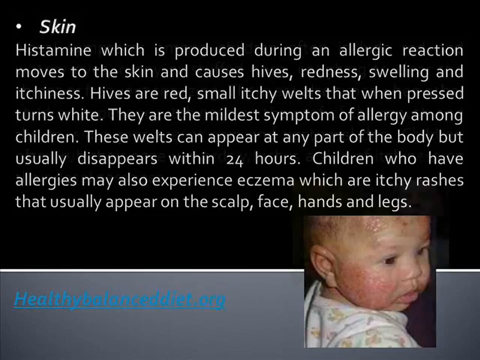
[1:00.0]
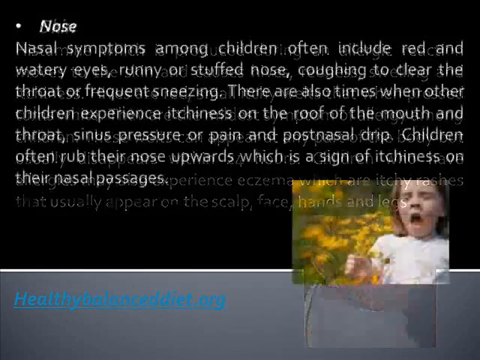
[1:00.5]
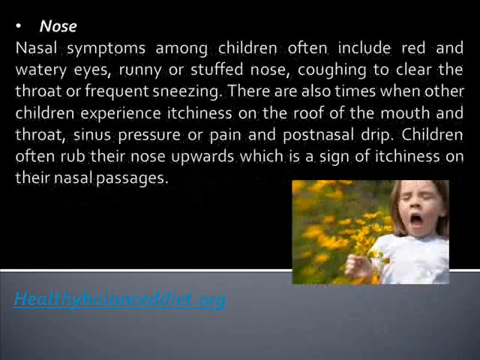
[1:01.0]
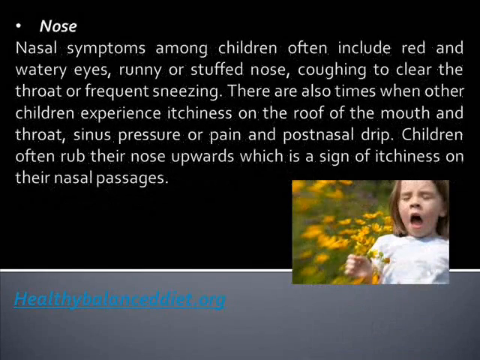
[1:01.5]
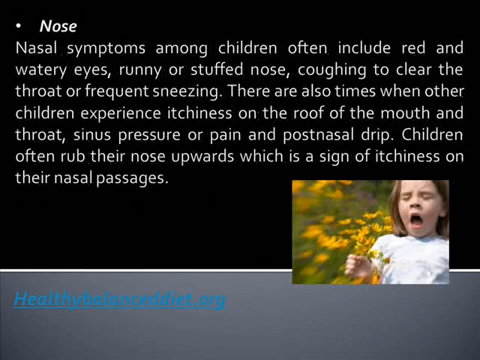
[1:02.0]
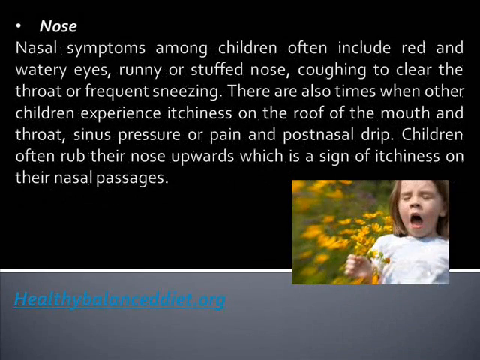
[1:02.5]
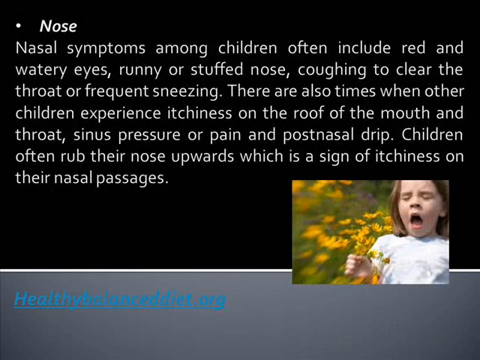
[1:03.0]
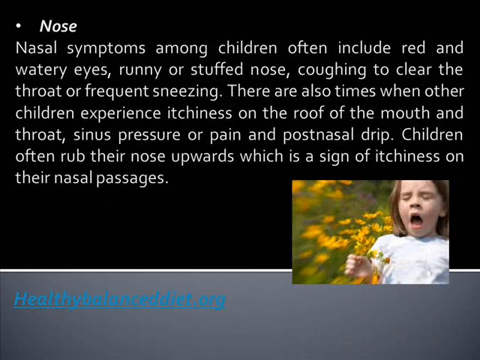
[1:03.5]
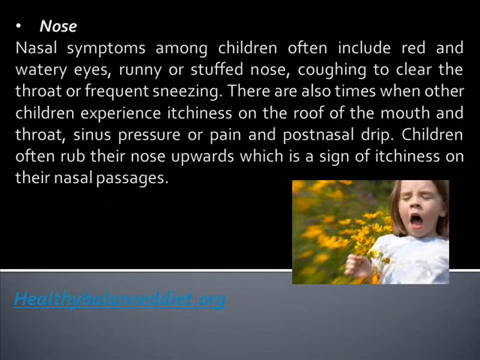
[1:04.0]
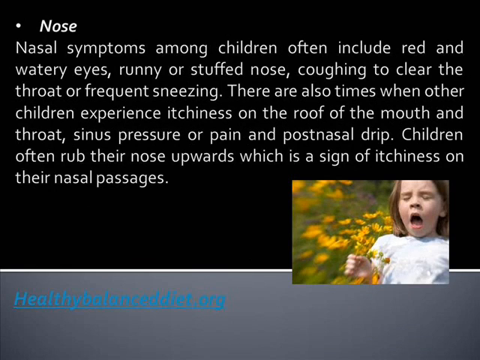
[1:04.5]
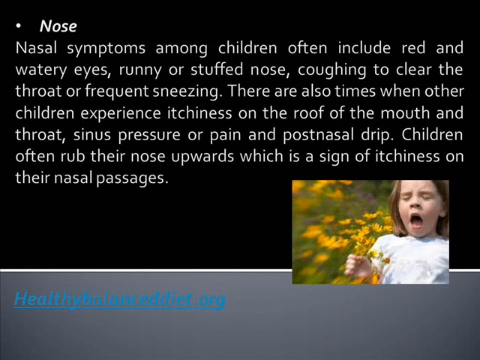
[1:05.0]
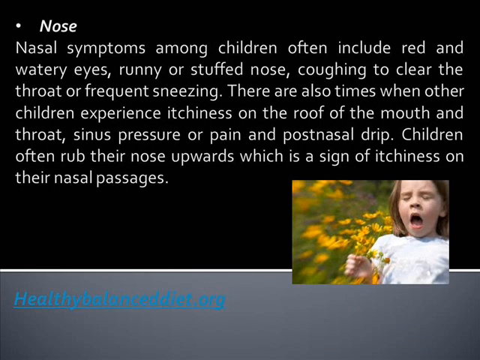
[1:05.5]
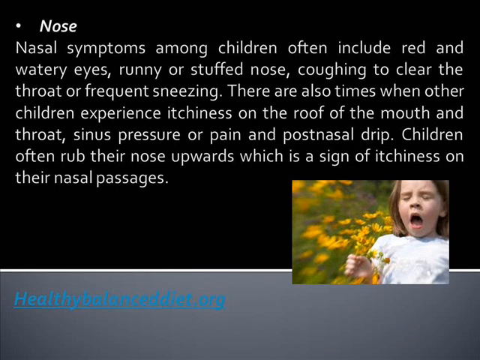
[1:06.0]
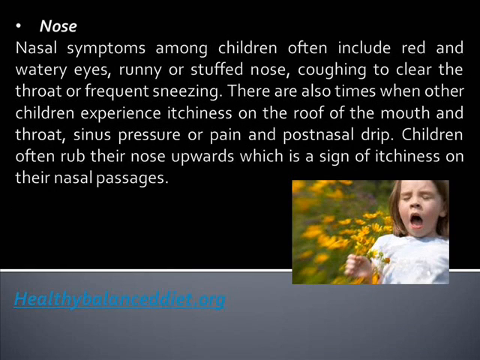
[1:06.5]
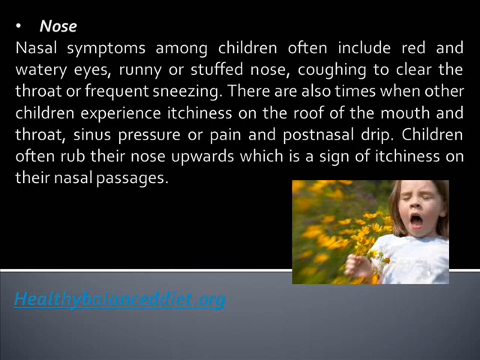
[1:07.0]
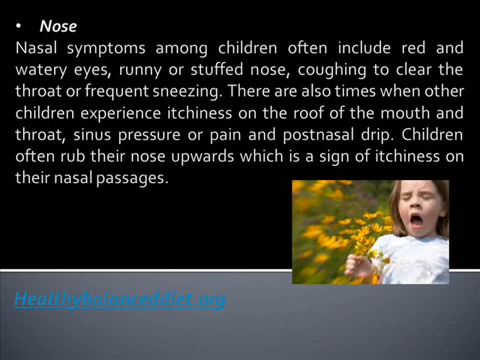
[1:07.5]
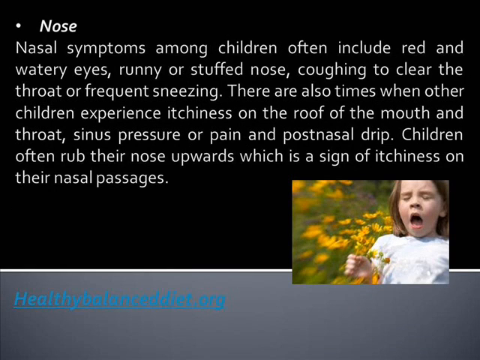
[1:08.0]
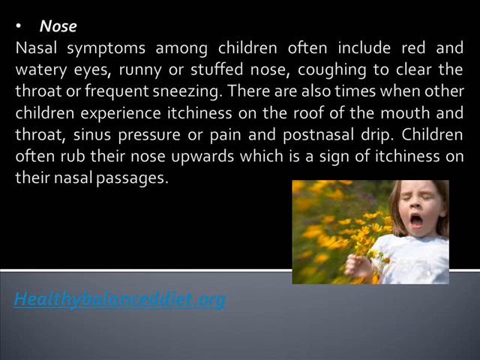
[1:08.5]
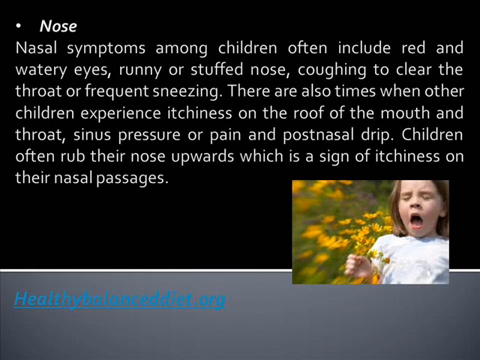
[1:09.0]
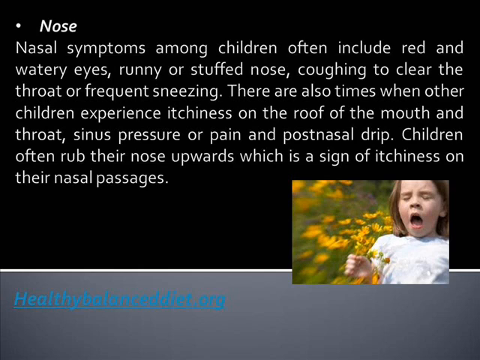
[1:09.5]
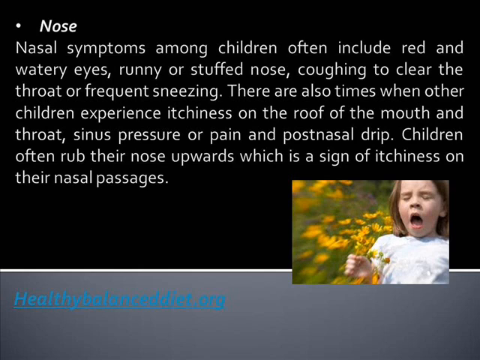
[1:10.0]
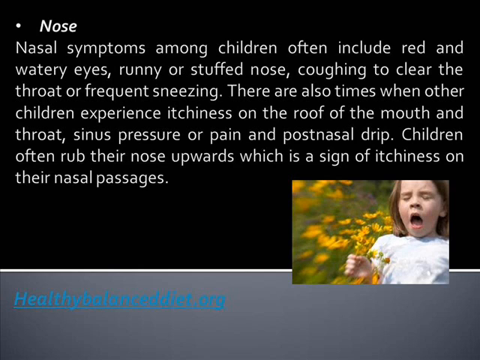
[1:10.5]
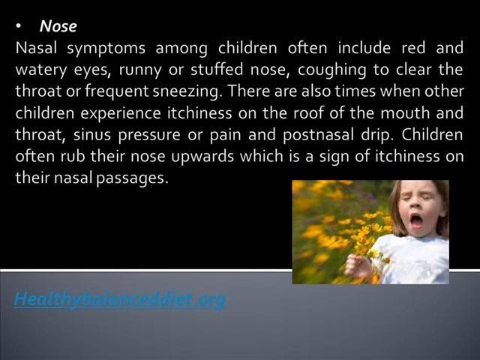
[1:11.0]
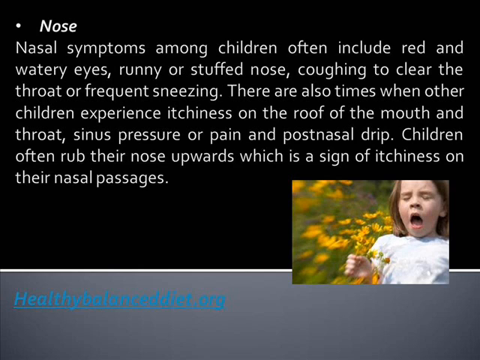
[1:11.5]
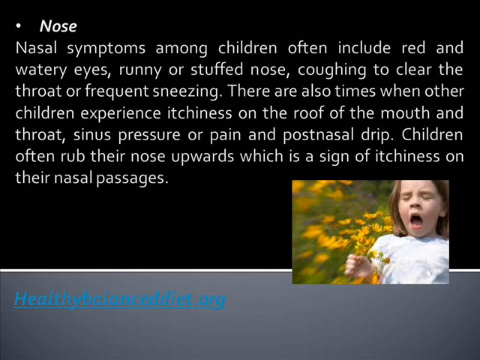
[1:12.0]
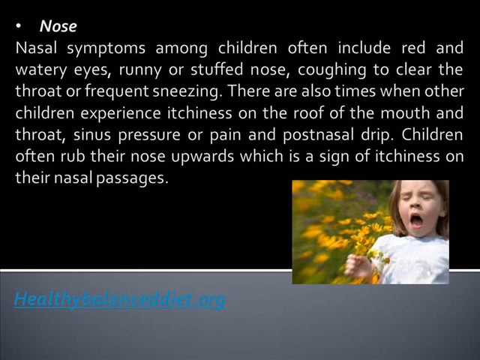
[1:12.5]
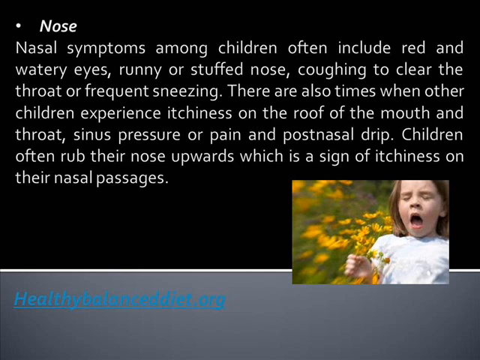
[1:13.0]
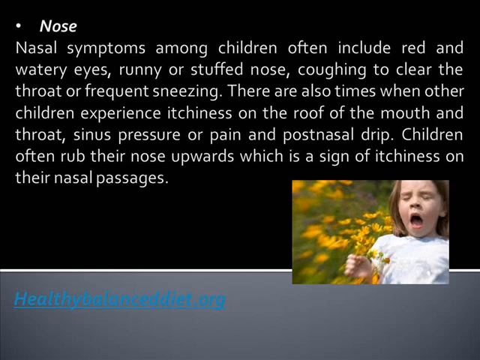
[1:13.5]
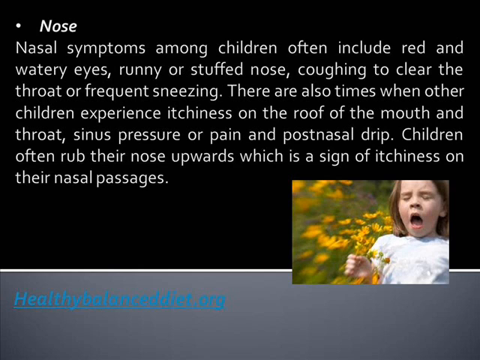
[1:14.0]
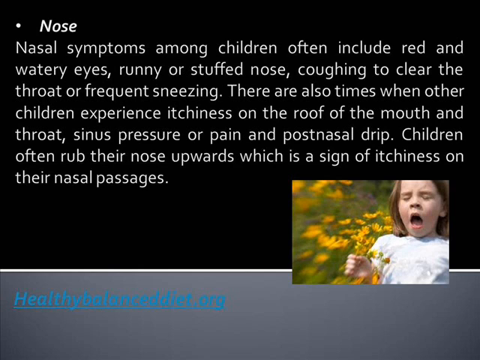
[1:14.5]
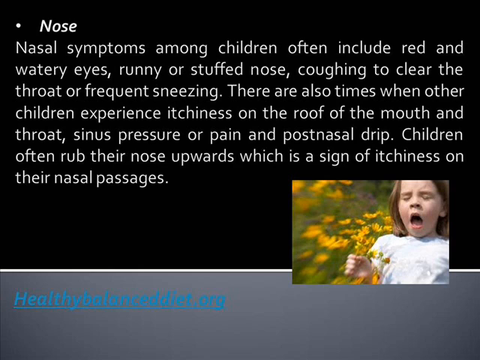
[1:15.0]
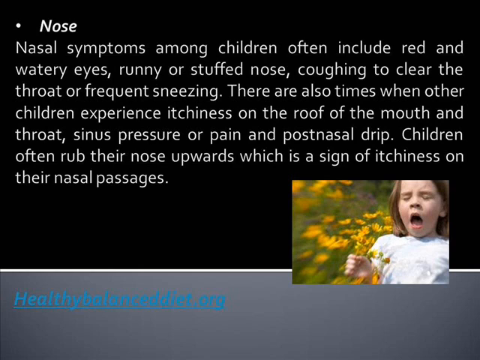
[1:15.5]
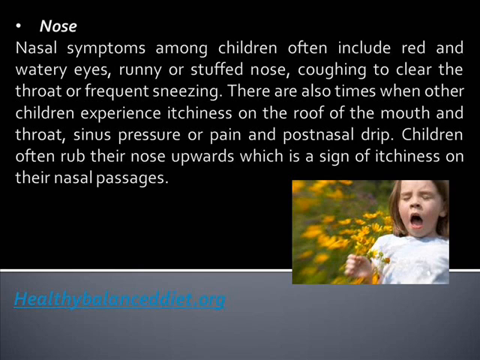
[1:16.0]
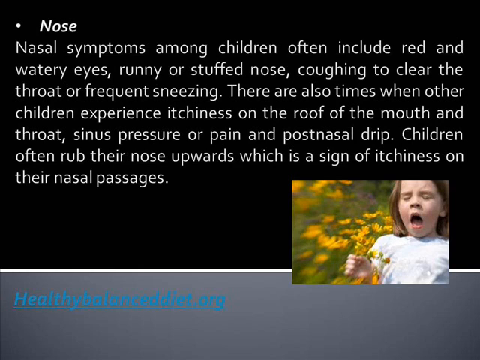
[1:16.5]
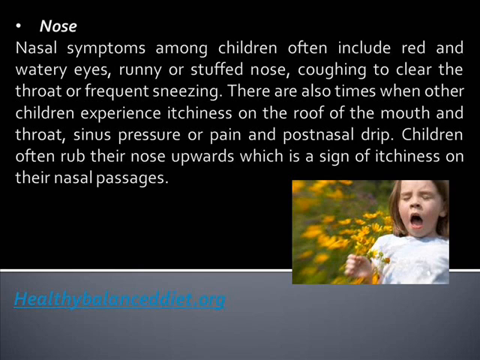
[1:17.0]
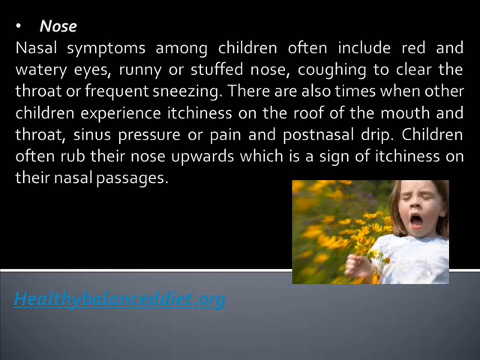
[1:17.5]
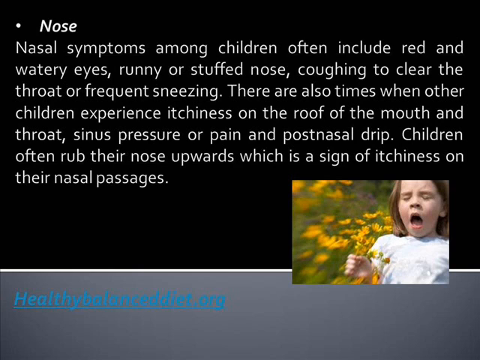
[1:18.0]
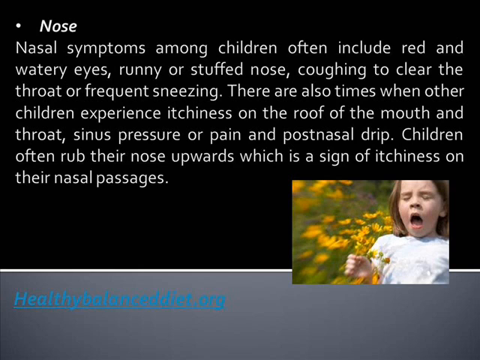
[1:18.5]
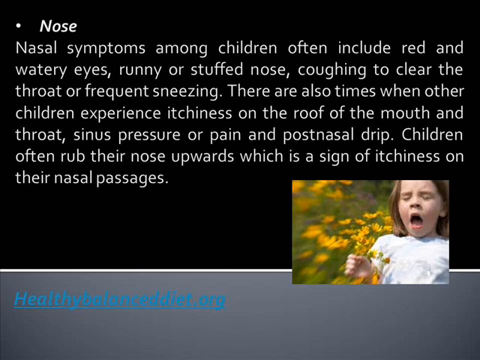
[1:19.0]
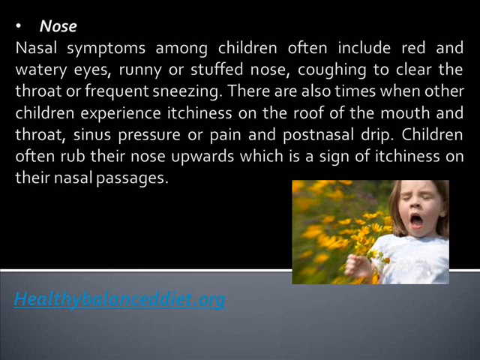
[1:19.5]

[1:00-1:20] A new graphic appears, still on the black background with the gray banner at the bottom and the blue website still in the lower left. The photograph on the right now shows a young girl in a white shirt with shoulder-length brown hair who looks ready to sneeze: her eyes are closed and her mouth is open. She holds some dandelions or wildflowers in her right hand, and many wildflowers blur out of focus off to the right, with some green, like grasses, in the background. The photo is a close-up from the chest up, with the top of her head cut off. The graphic is titled "Nose" in bold white with a bullet point, and underneath it reads, "Nasal symptoms among children often include red and watery eyes, runny or stuffed nose, coughing to clear the throat or frequent sneezing. There are also times when other children experience itchiness on the roof of the mouth and throat. Sinus pressure or pain and post nasal drip. Children often rub their nose upwards which is a sign of itchiness on their nasal passages." This graphic stays for the whole section.